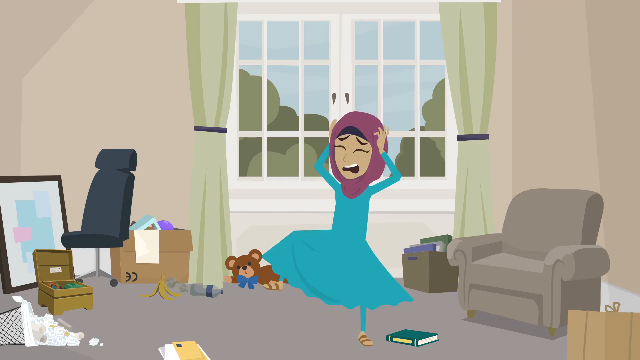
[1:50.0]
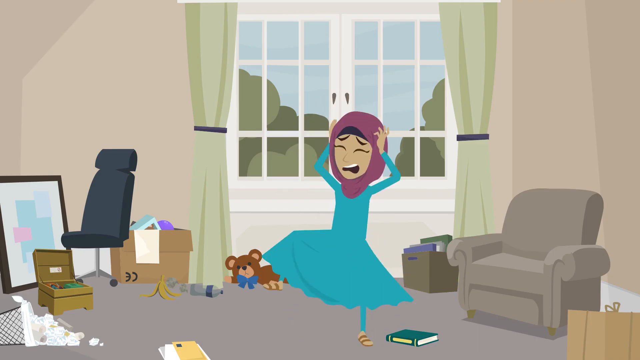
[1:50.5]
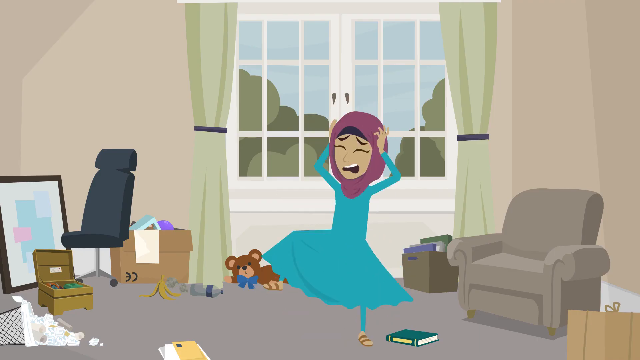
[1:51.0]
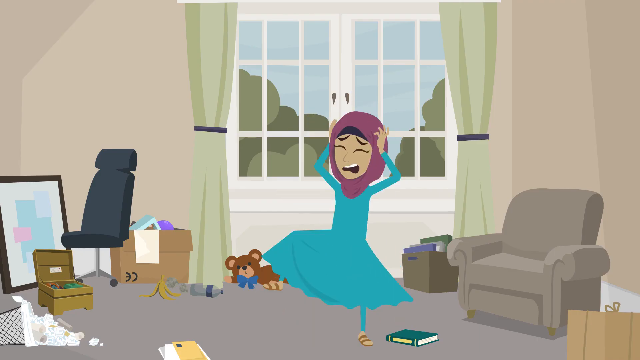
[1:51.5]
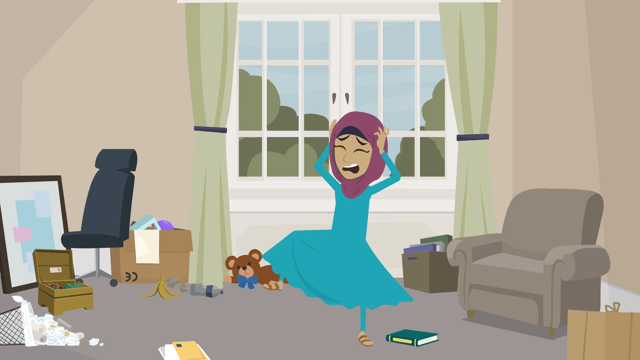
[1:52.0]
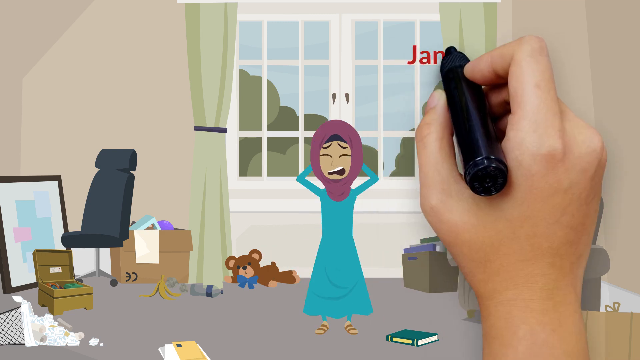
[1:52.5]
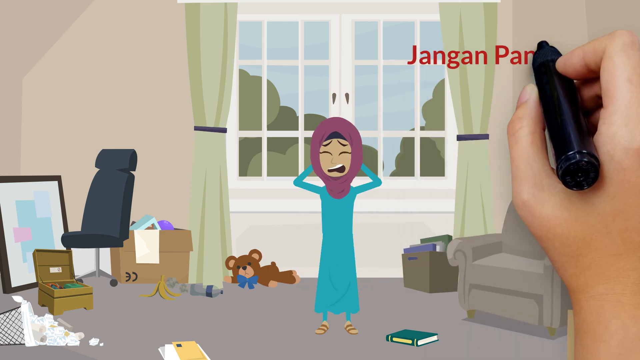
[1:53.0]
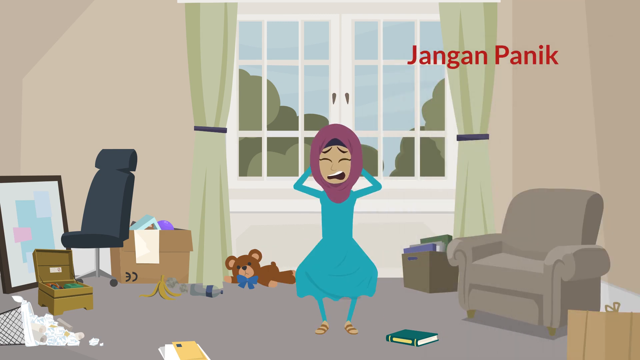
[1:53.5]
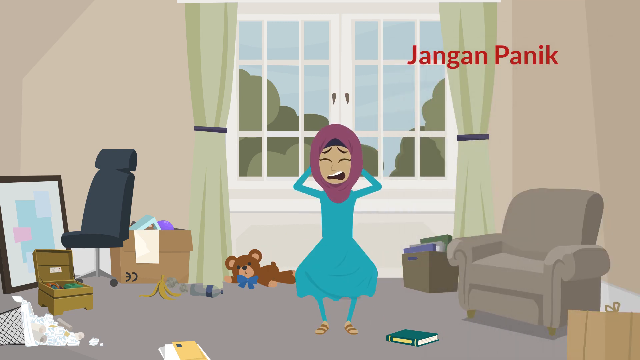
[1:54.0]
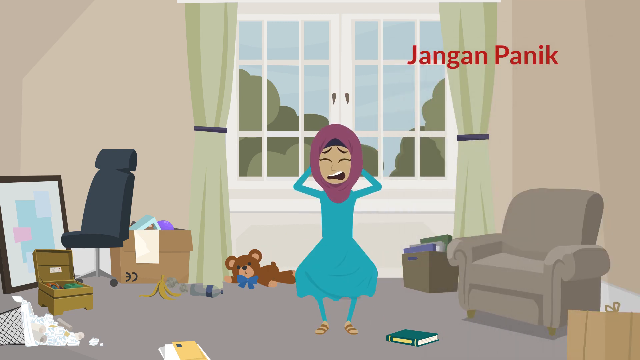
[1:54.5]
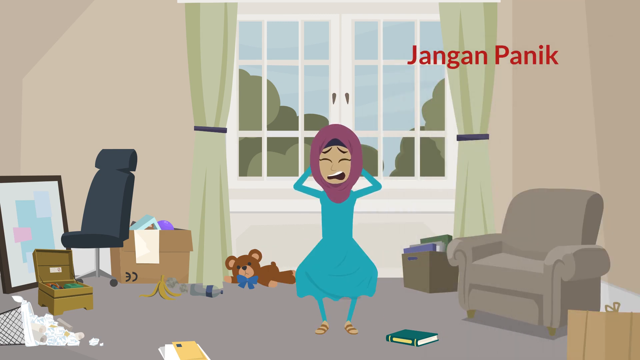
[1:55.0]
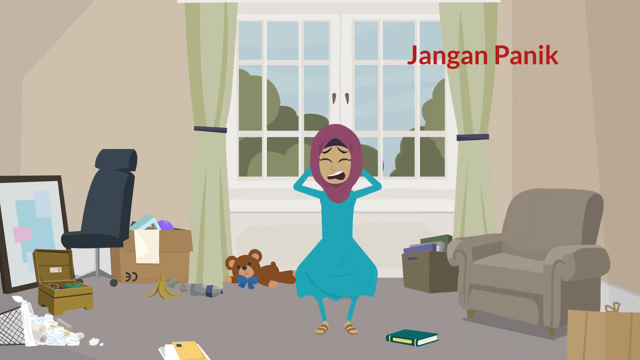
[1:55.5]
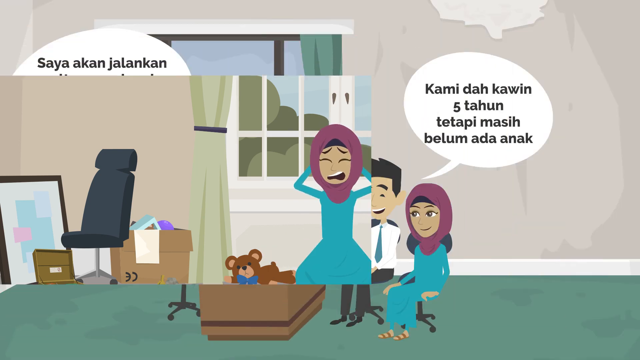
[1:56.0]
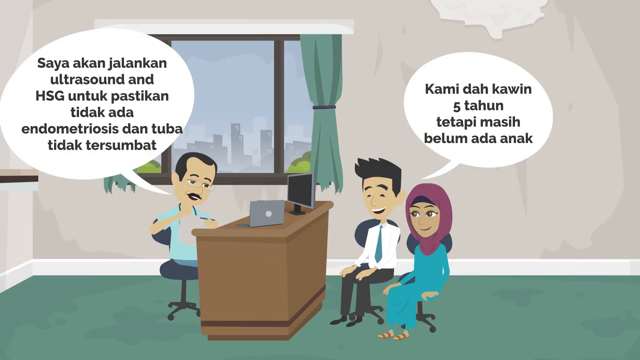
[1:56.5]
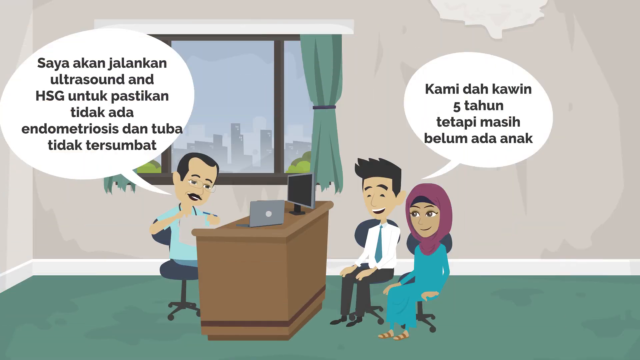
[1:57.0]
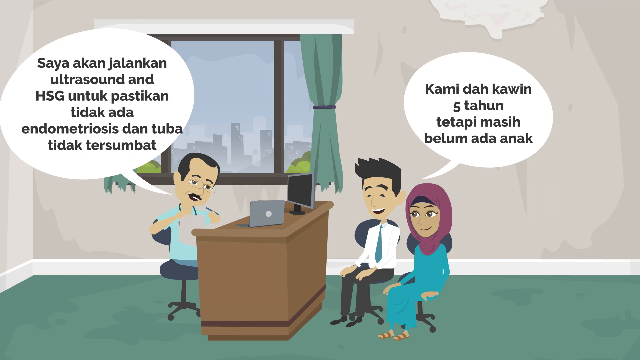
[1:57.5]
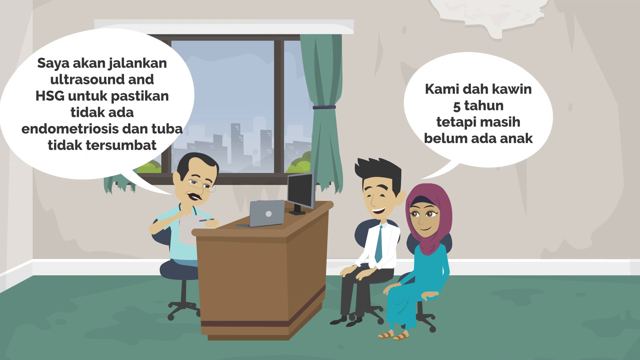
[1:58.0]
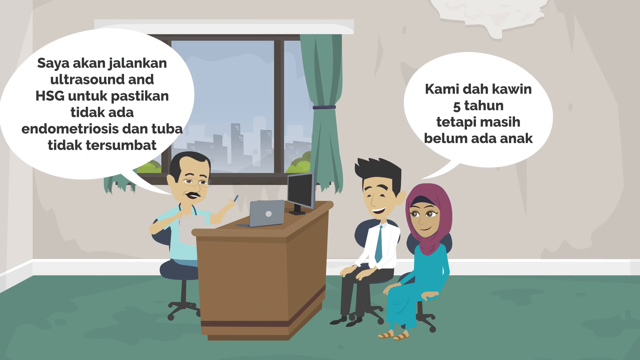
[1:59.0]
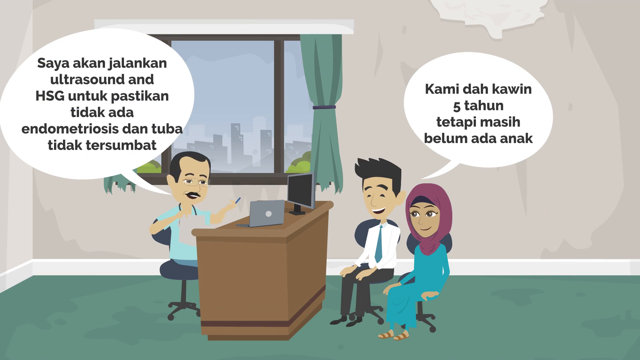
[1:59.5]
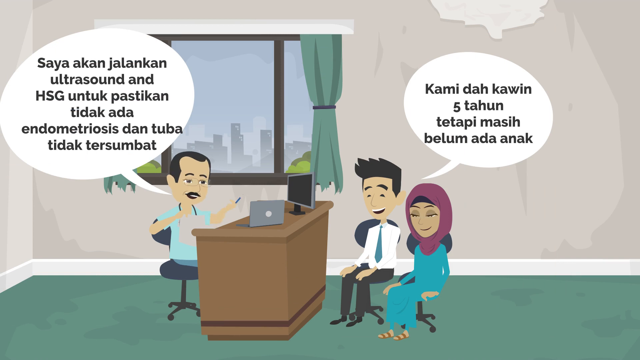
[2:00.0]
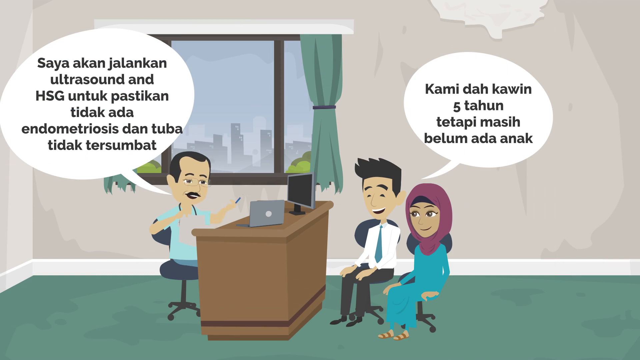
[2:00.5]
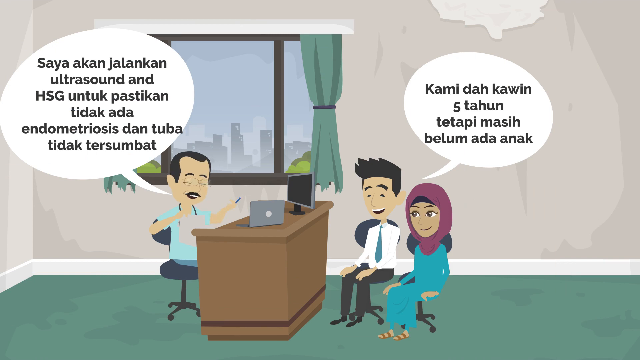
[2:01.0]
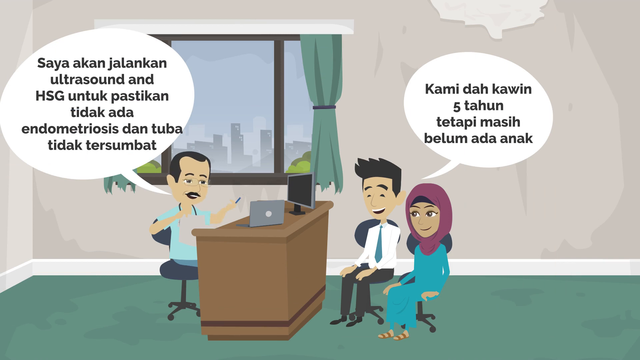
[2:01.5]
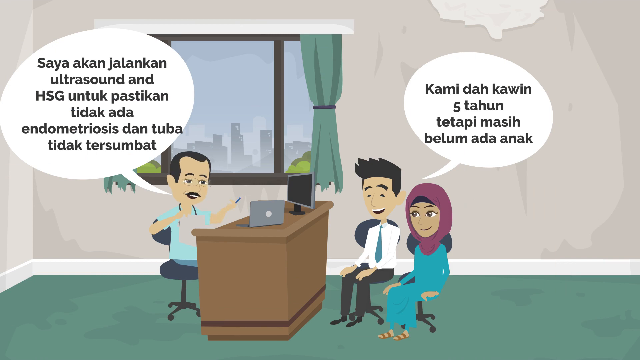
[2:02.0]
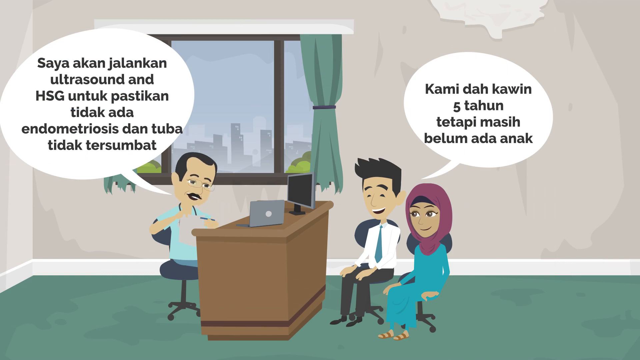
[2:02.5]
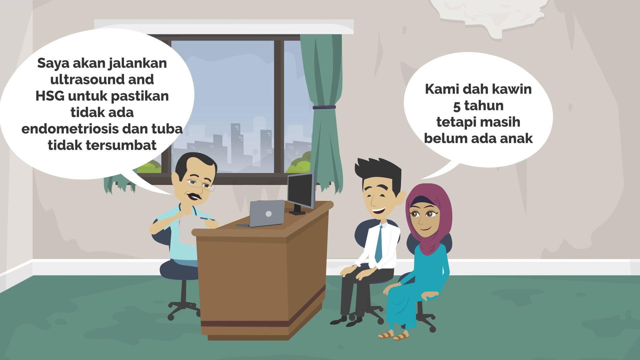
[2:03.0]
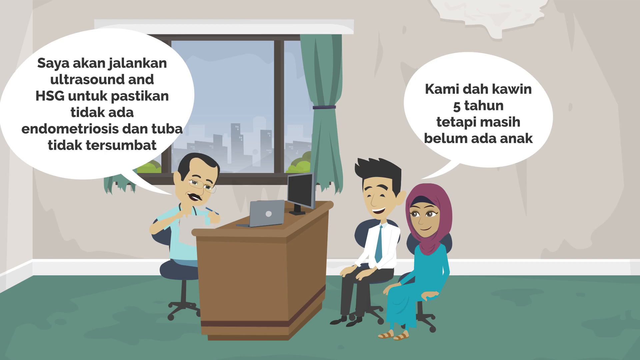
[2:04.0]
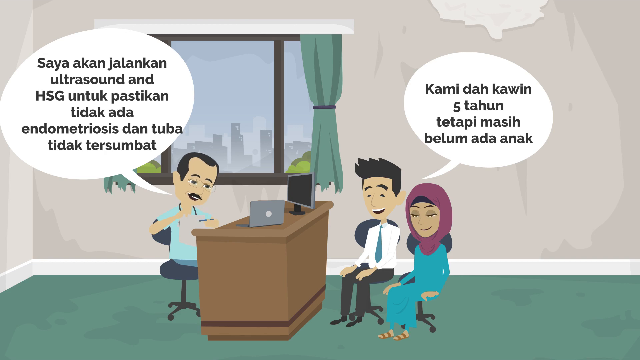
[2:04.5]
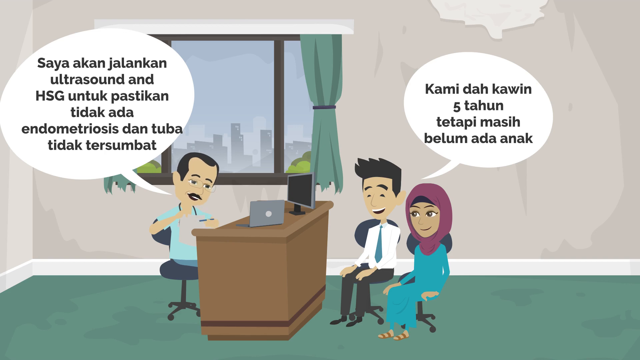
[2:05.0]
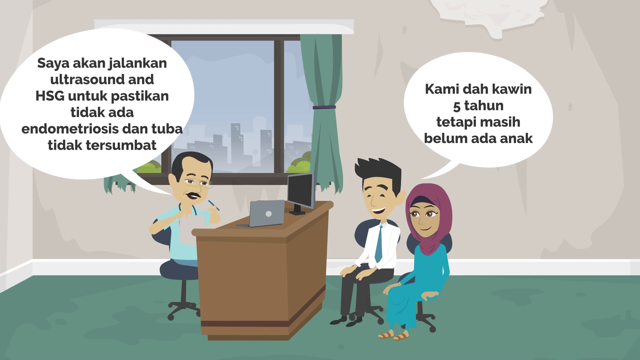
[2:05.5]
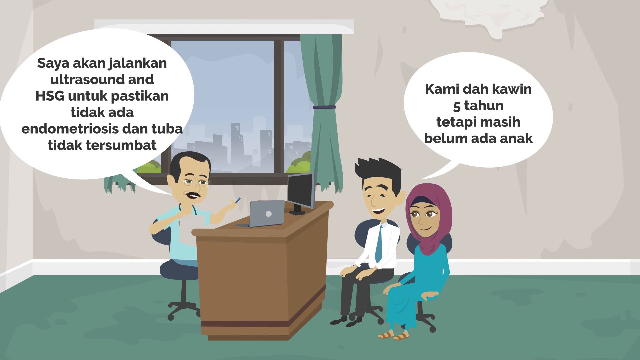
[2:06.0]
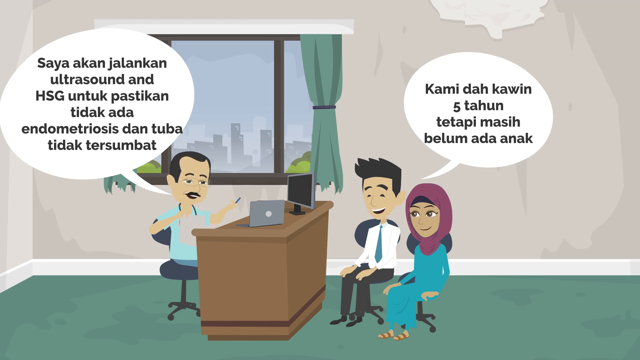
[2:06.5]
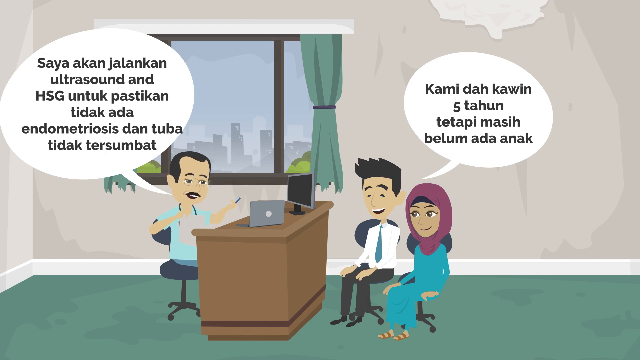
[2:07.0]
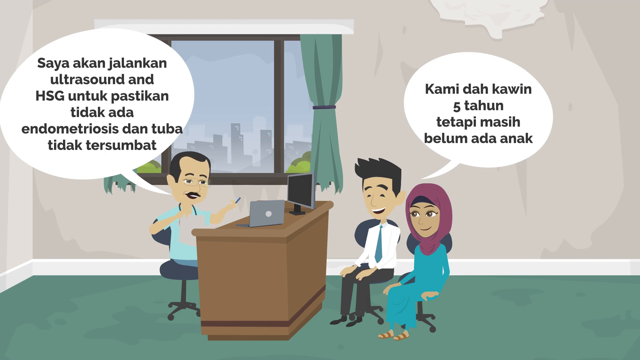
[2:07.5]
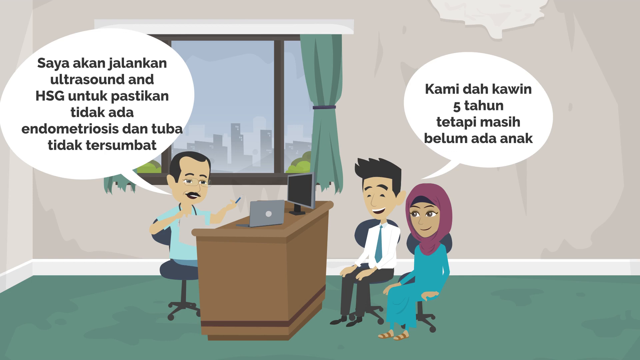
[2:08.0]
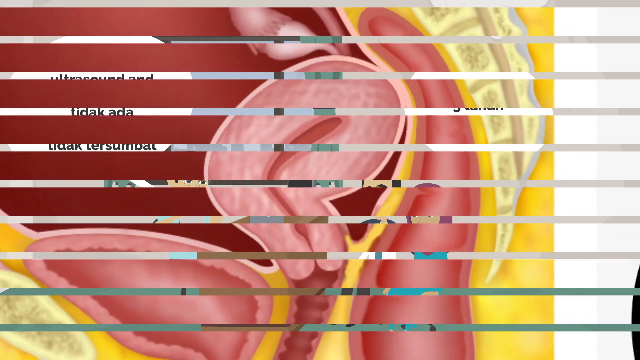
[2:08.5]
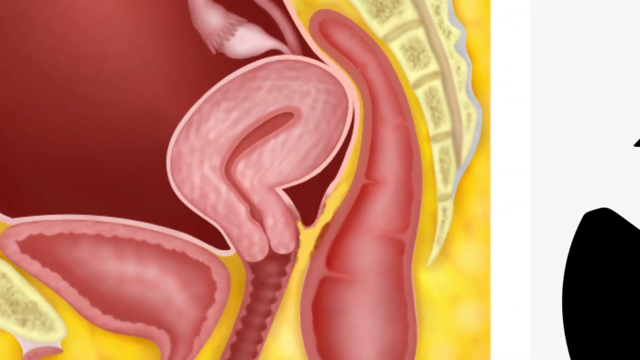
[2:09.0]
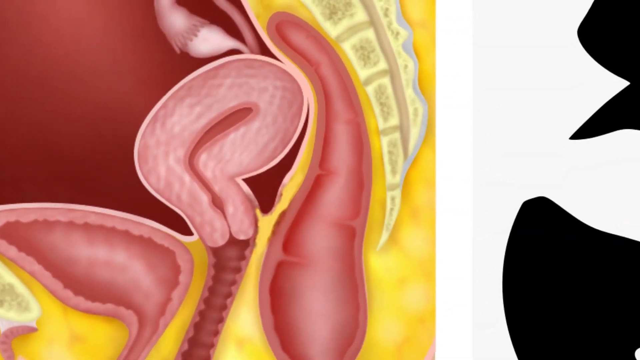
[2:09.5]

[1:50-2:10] The woman goes back and forth yelling and screaming. She wears a green dress and a head covering of a sort of maroon or pink color. In her house there is a chair and a window with green blinds in the background, a picture and another blue chair to the left, and some stuffed animals and boxes. On the right, a hand comes onto the screen and writes something in red at the top right. The woman appears to be crying. The scene then goes to the doctor's office again, where the lady sits with a man who is probably her husband; he has dark hair and wears a green tie, a white shirt, and black pants. The doctor, in what look like light blue scrubs, sits in a chair in front of a brown desk; he has a mustache and dark hair. On the desk are a computer screen and a laptop, a city is visible through the blinds of the window in the background, and the floor is green. They are talking to each other.